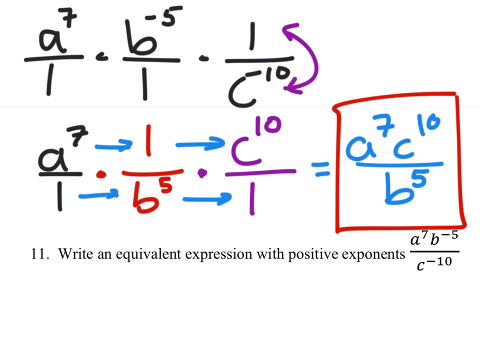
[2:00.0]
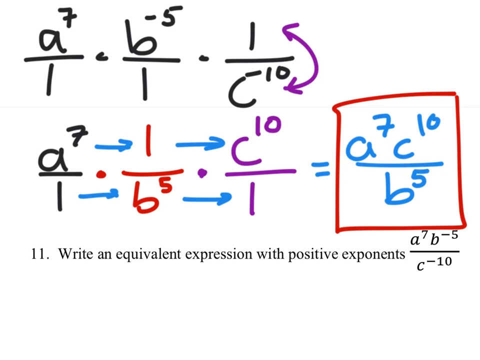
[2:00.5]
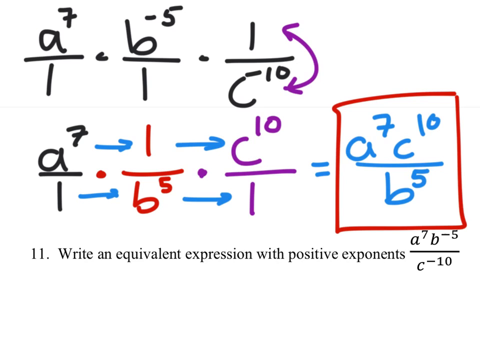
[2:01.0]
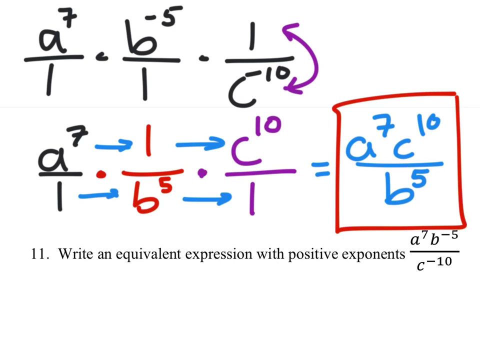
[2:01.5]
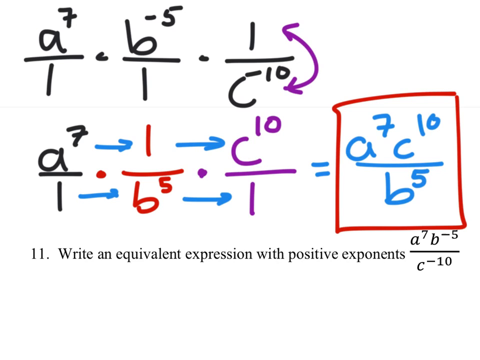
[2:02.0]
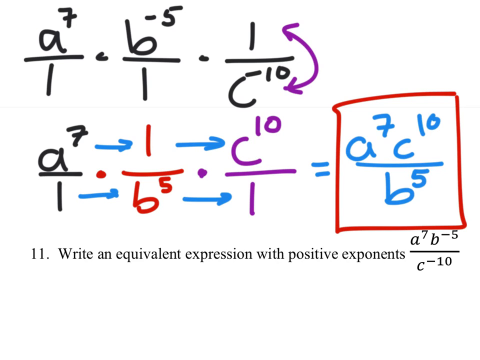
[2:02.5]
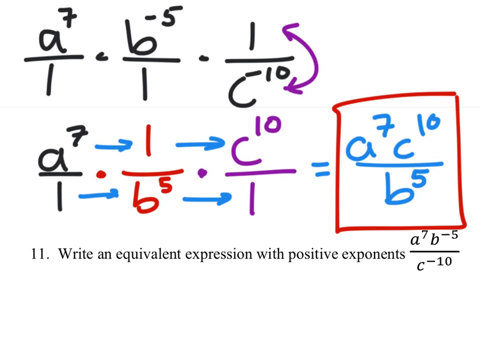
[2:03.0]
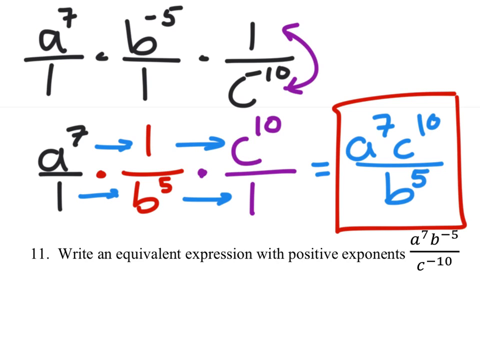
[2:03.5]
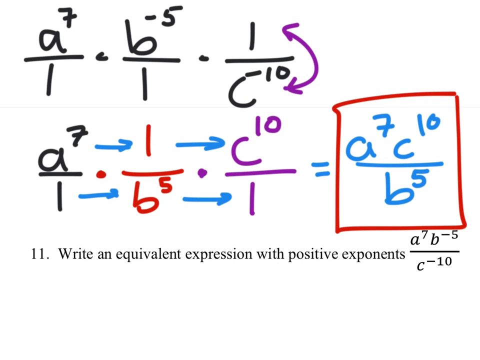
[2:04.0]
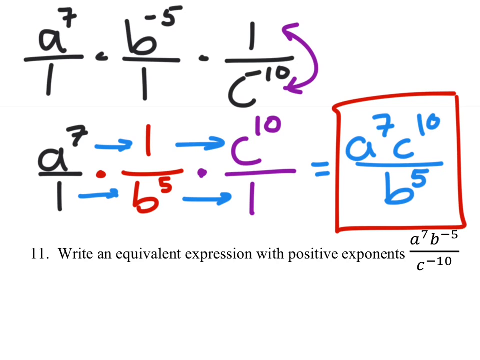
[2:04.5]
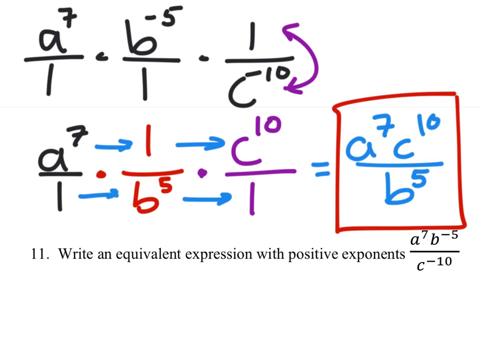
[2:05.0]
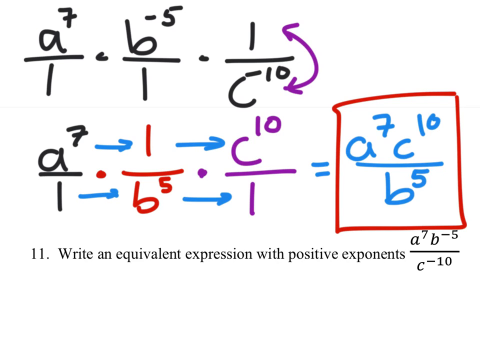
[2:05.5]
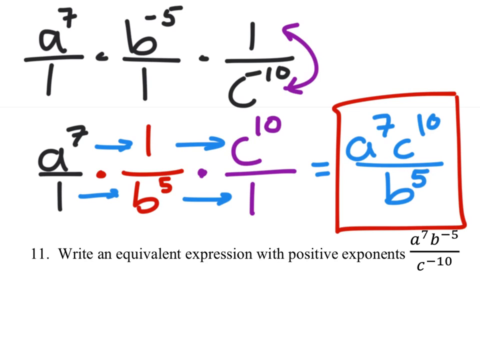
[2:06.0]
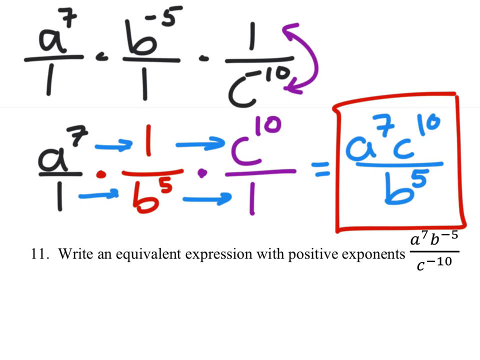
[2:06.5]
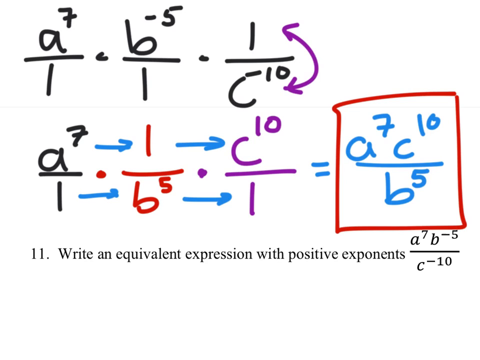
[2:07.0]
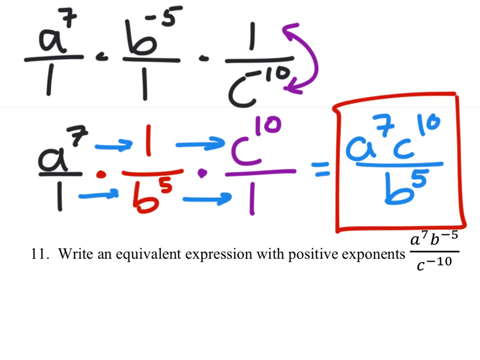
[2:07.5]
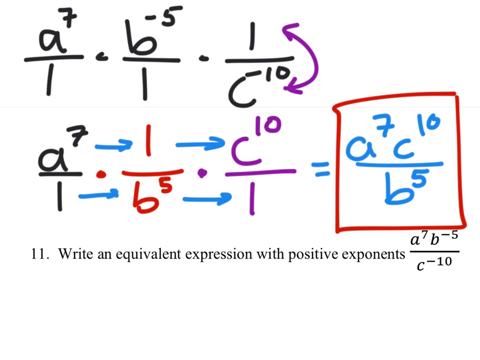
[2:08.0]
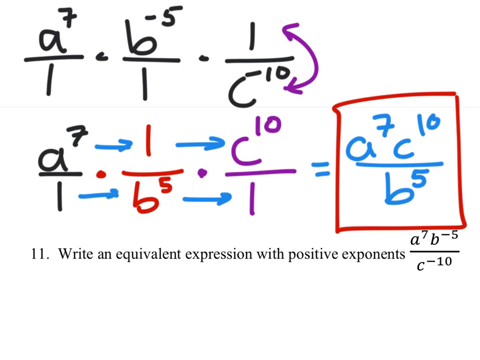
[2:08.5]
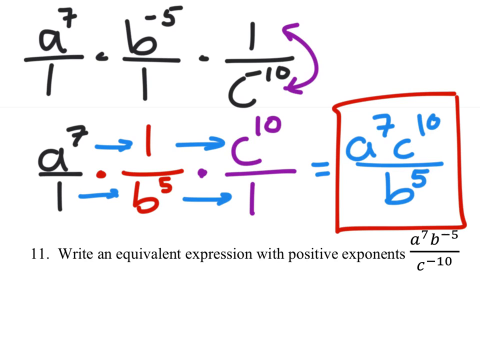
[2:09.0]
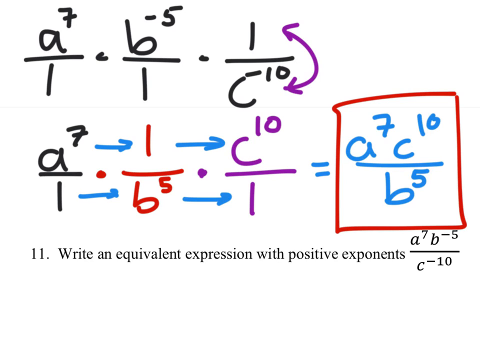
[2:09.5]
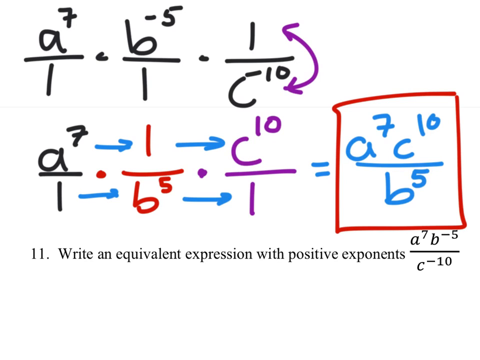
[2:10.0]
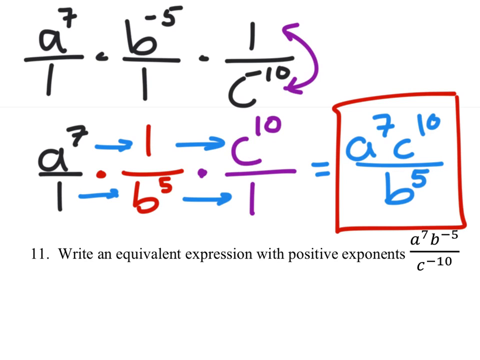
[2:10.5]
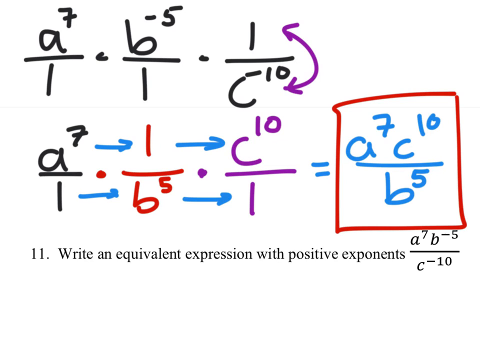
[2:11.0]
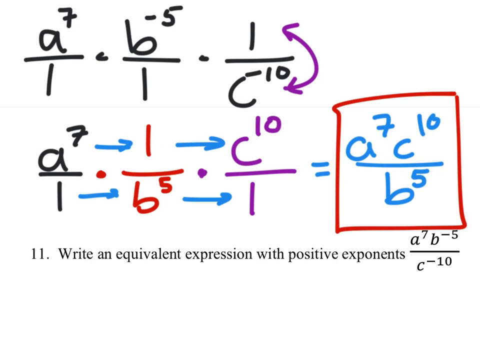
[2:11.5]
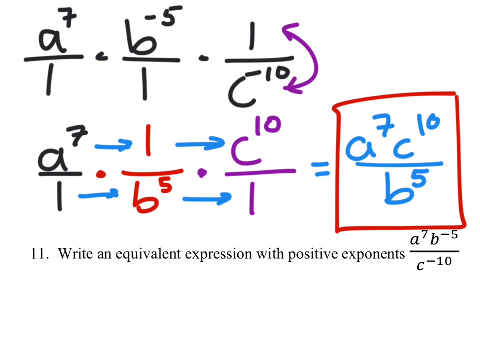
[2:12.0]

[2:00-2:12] Nothing changes on the board: no numbers, letters, exponents, signs or arrows are added. The red box drawn around the positive-exponent expression appears to mark the final answer.